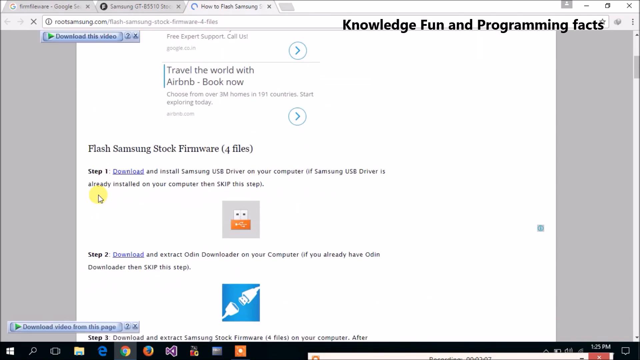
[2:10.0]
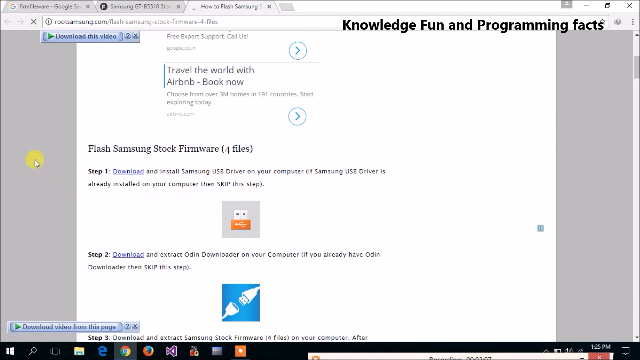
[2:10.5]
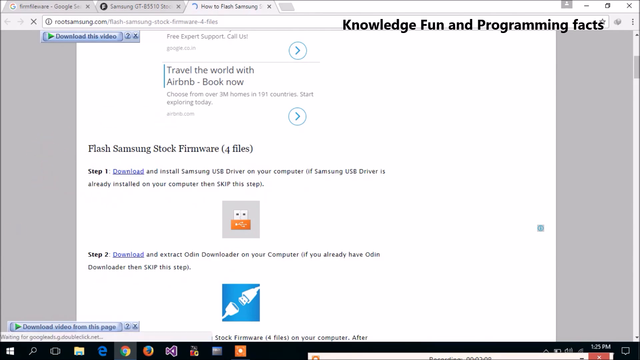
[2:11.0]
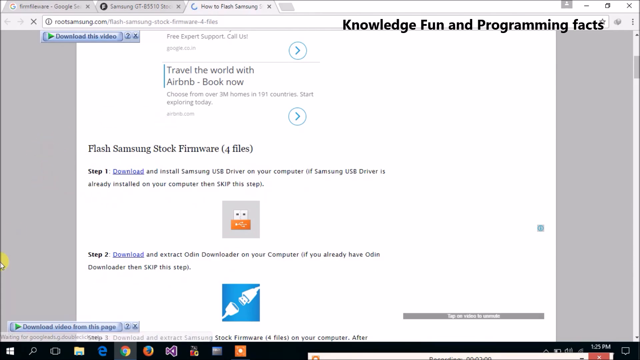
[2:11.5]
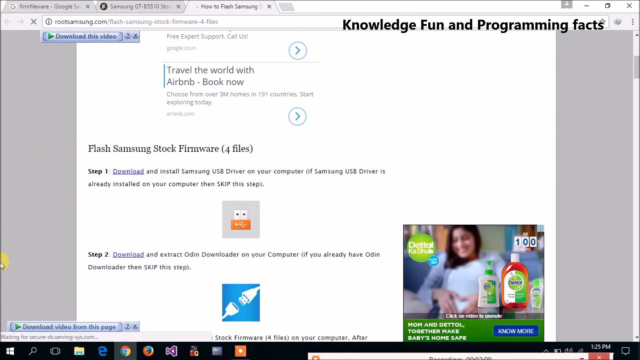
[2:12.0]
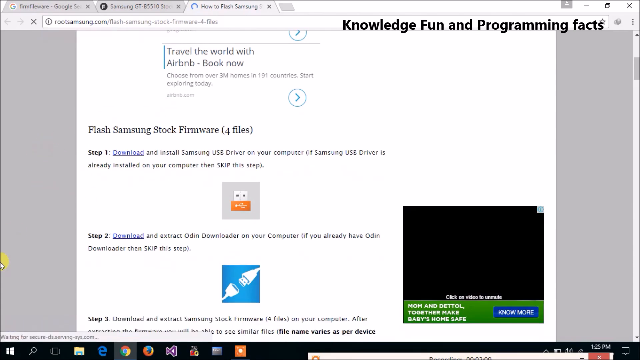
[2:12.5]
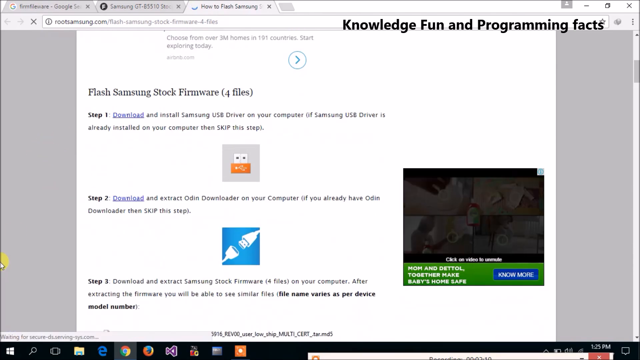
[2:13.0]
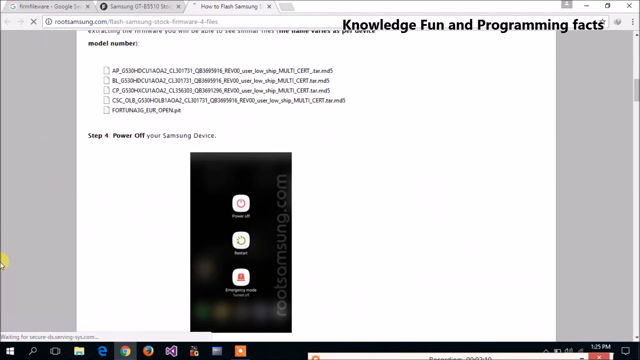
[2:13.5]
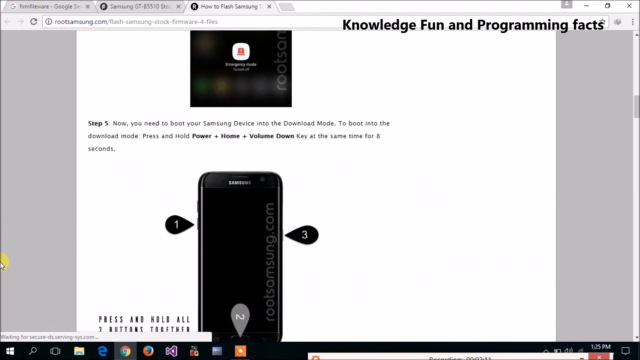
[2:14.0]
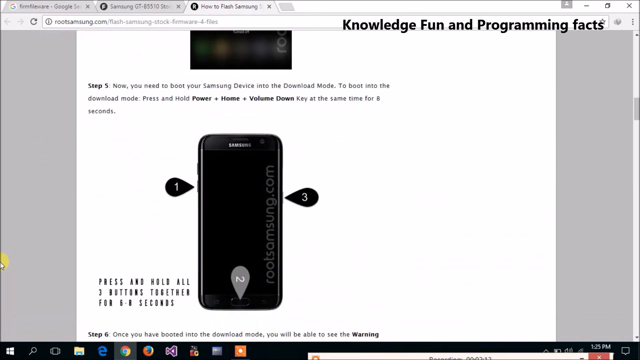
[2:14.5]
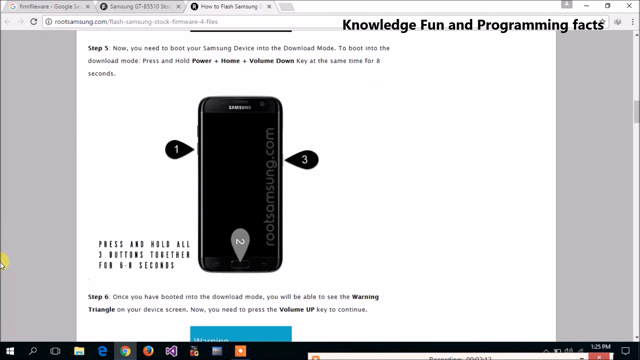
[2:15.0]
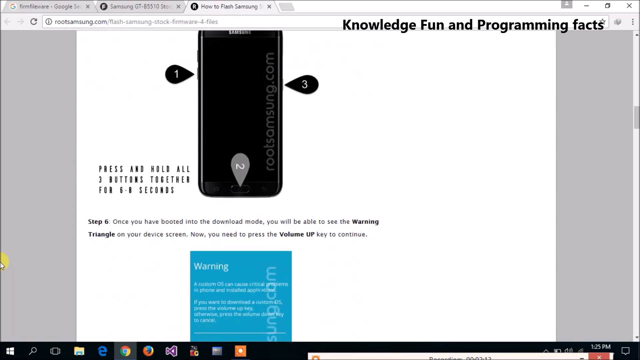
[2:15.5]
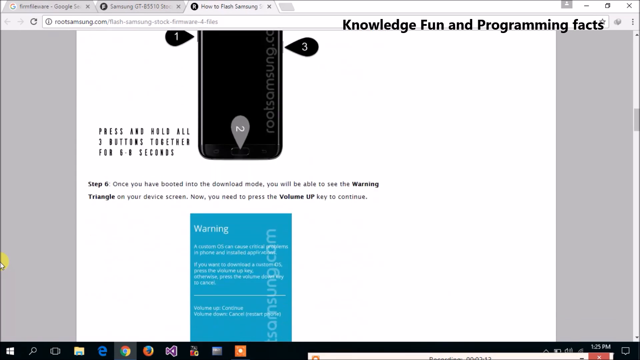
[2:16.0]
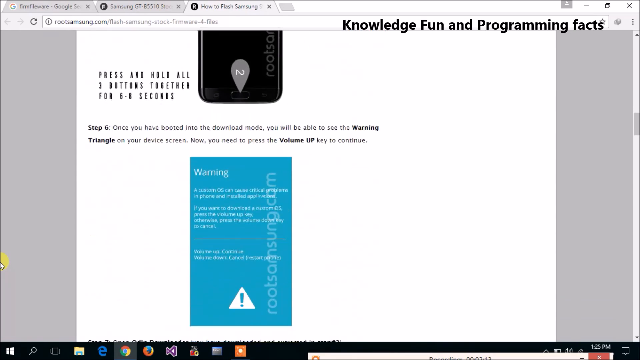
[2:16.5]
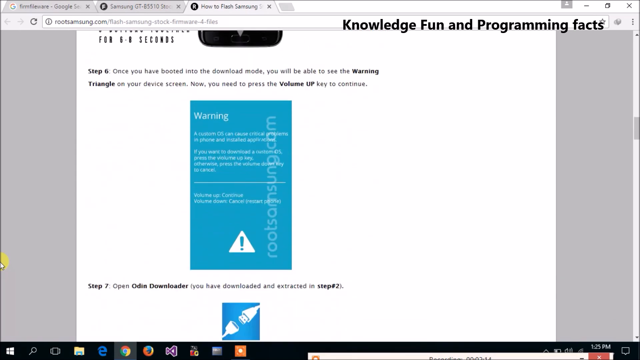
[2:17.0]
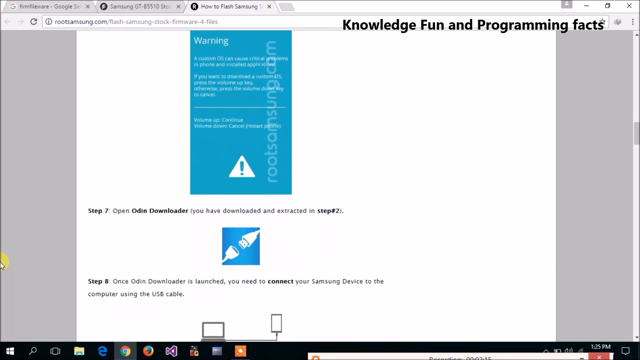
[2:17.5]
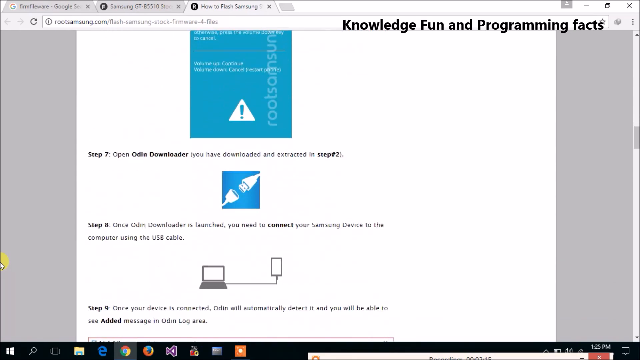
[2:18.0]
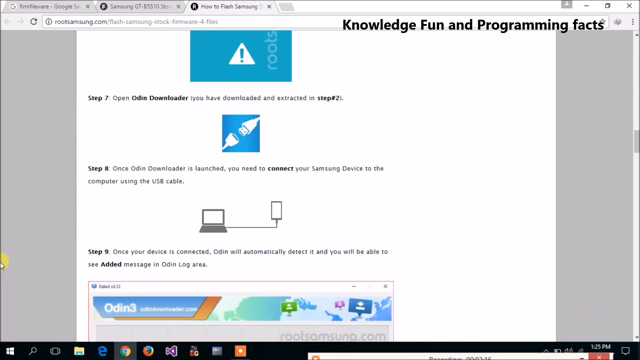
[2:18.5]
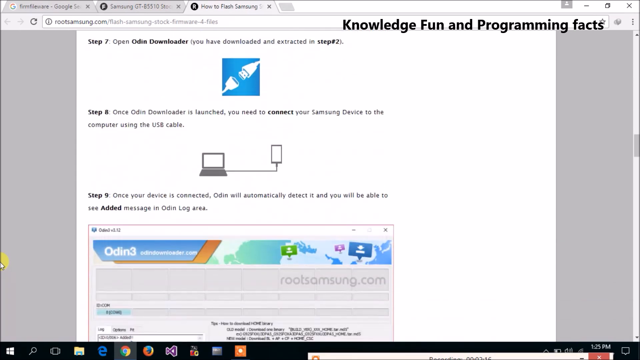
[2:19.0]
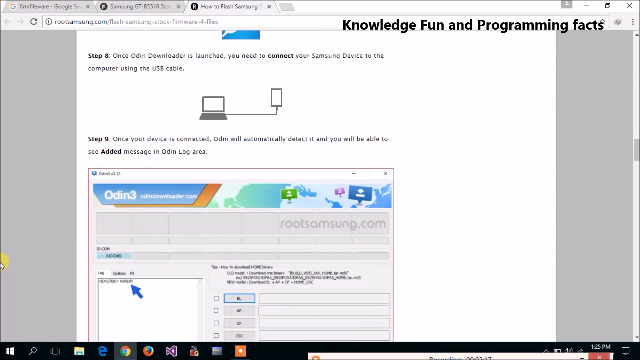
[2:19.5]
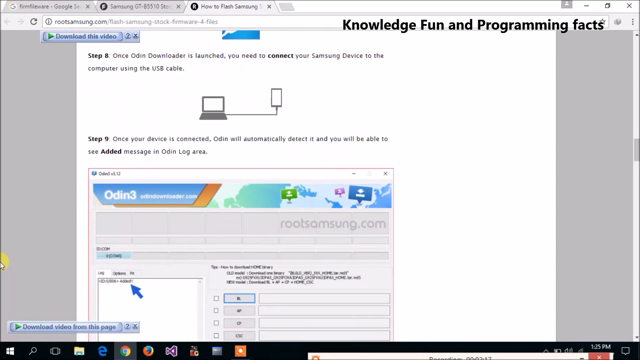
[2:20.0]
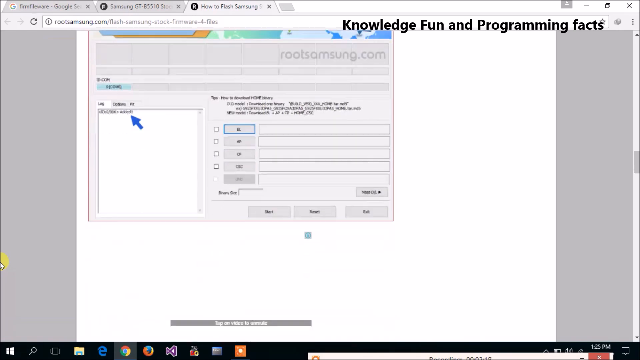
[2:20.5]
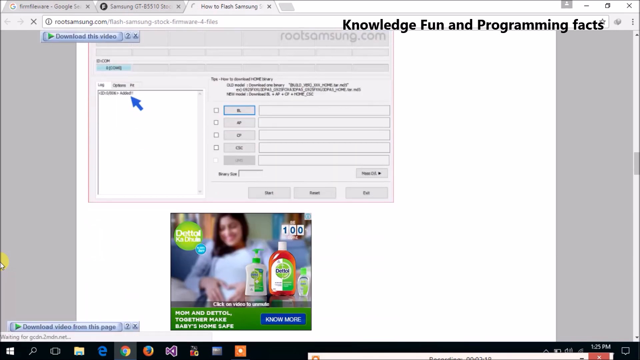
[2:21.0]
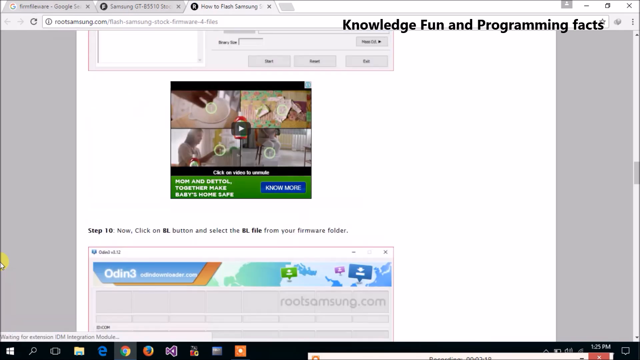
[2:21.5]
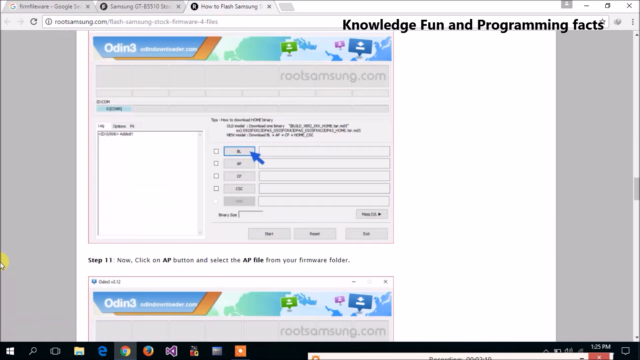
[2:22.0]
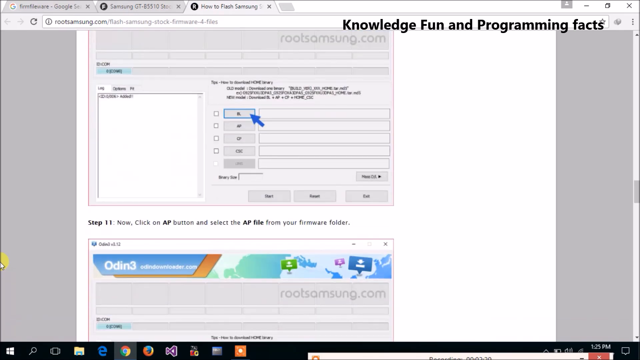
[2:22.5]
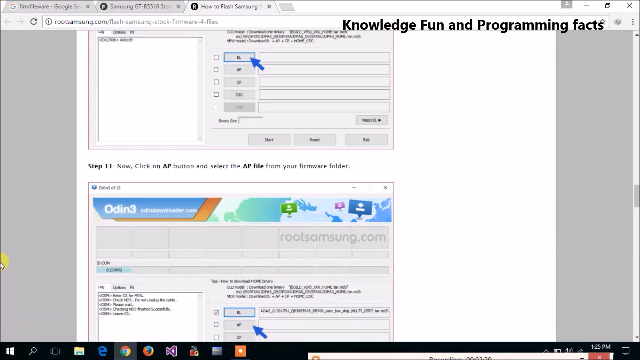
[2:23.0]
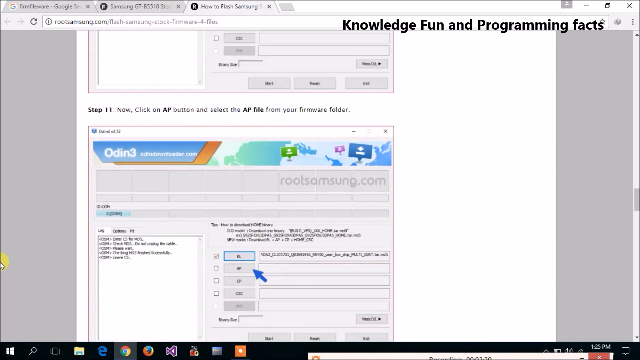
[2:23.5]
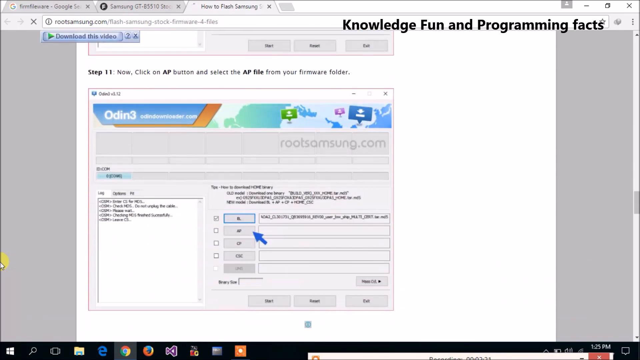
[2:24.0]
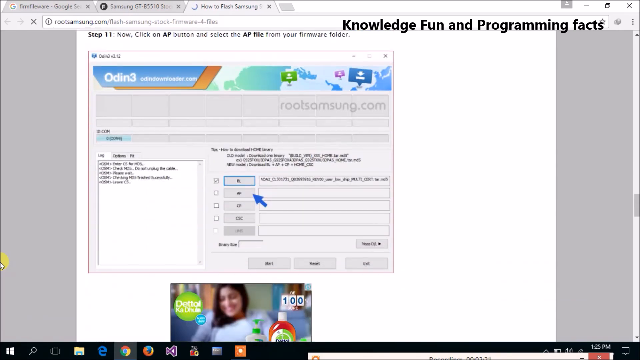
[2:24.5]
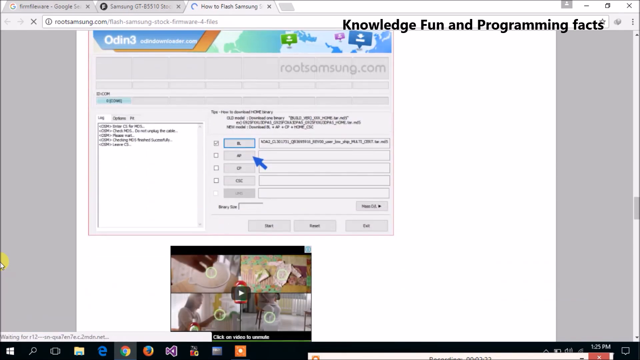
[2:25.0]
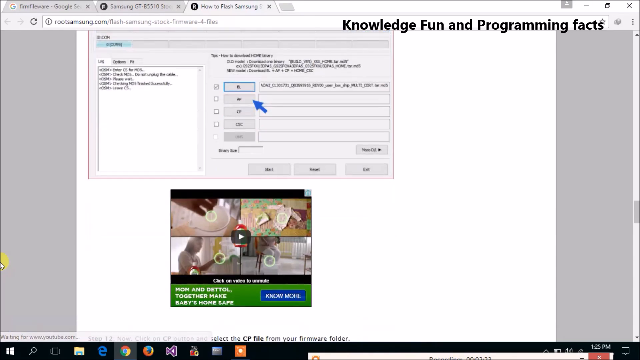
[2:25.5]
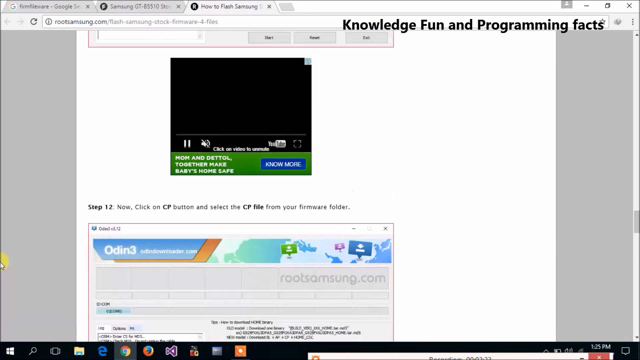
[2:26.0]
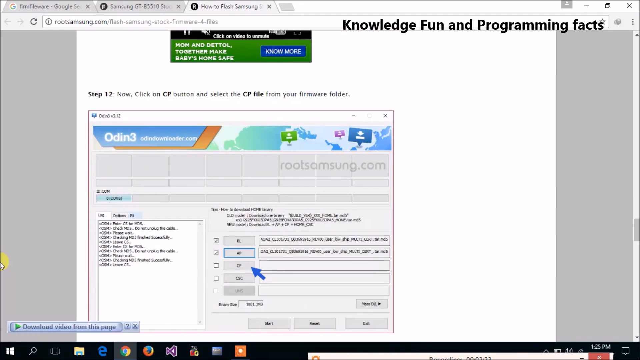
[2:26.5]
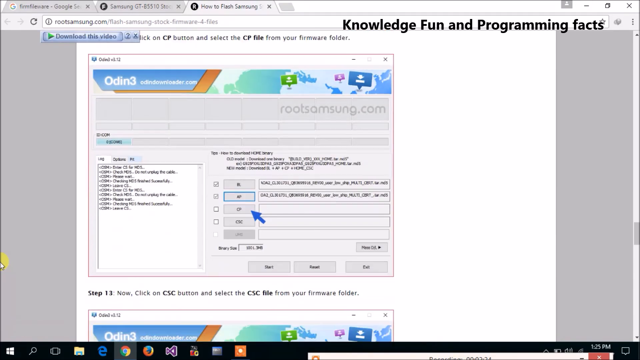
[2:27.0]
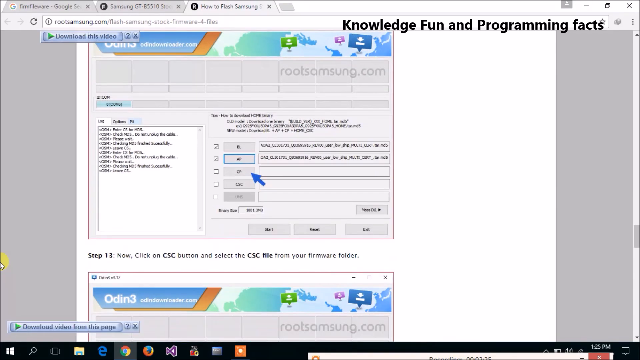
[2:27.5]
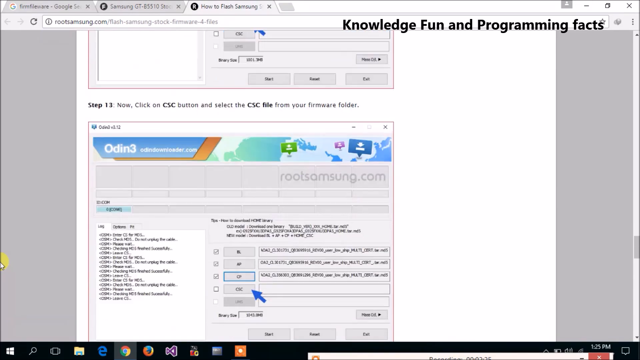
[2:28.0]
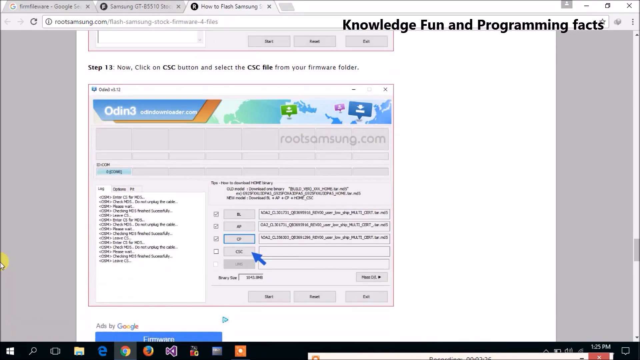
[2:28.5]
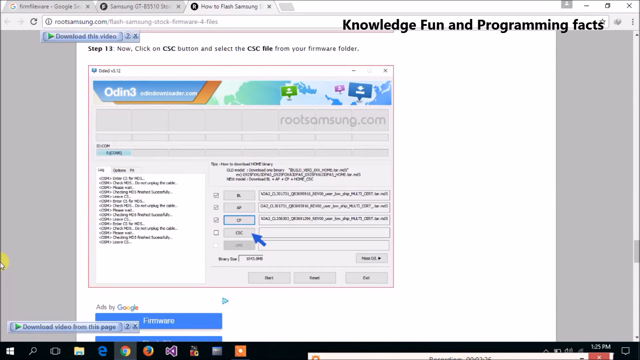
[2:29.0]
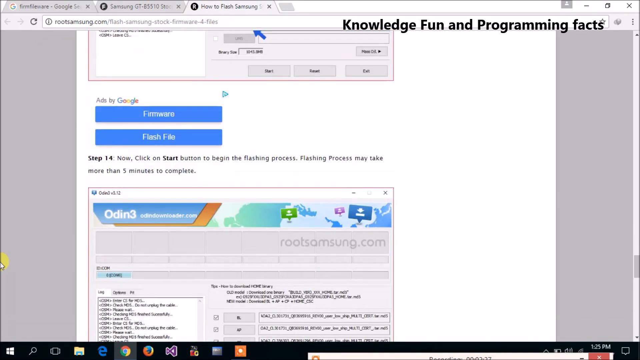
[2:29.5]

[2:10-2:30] A page shows the text "Flash Samsung Stock Firmware for Files" and displays steps on how to download some files. Icons are on display, such as a flash drive and a flash drive connecting to another cable. The user moves the cursor around, and what looks like an ad image appears and disappears. Scrolling down reveals different icons and form fields, as well as some embedded videos. In the top right corner of the screen is the text "Knowledge Fun and Programming Facts." The page has a lot of Google Ads embedded on it. The website is called RootsSamsung.com. There is a lot of tiny text that cannot be read. This might be a tutorial showing how to download the files on display.